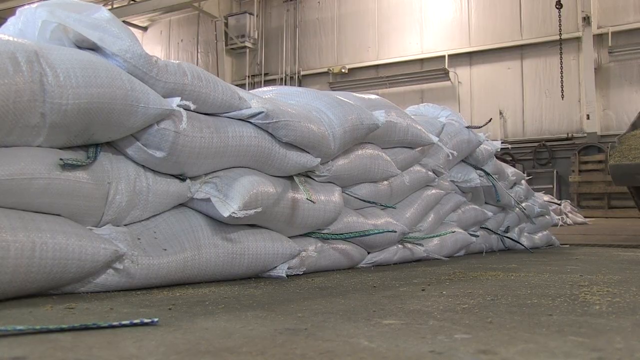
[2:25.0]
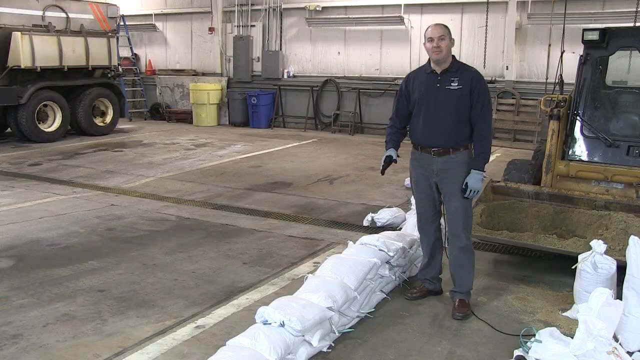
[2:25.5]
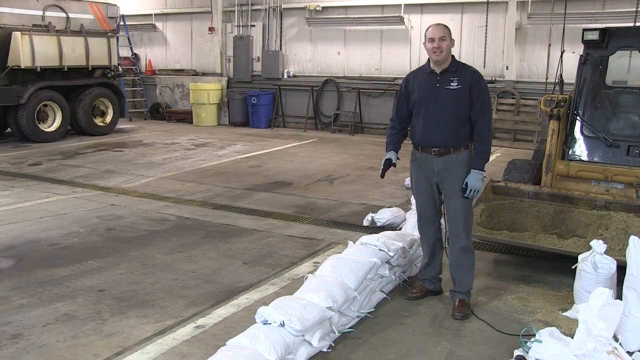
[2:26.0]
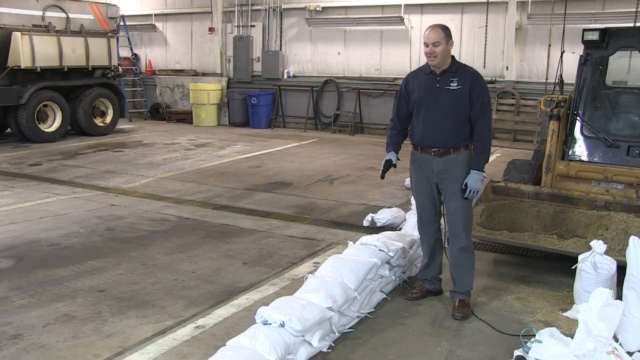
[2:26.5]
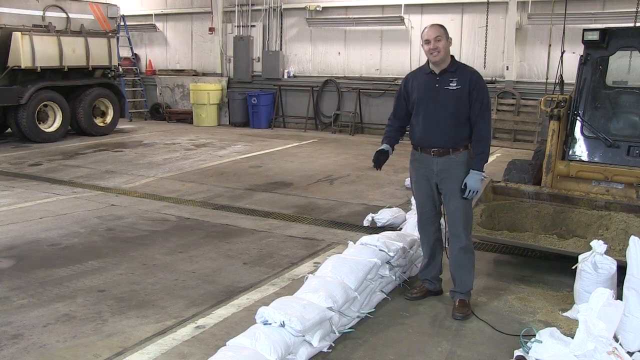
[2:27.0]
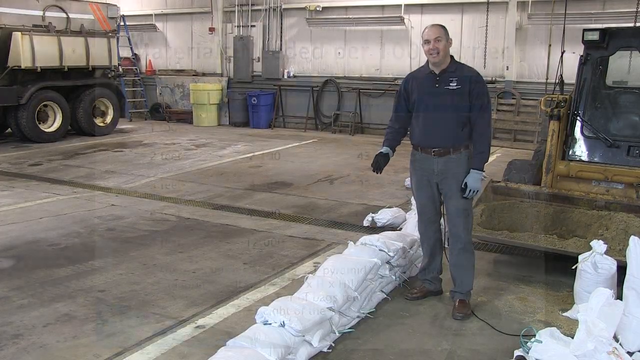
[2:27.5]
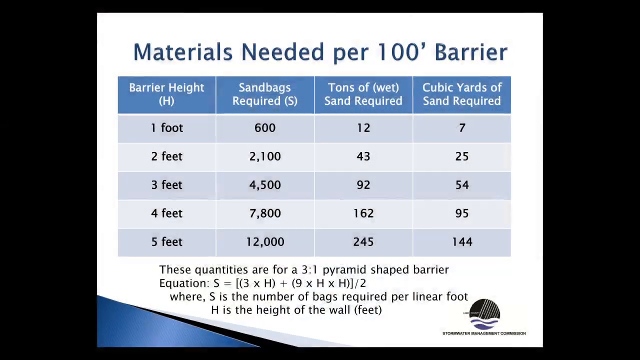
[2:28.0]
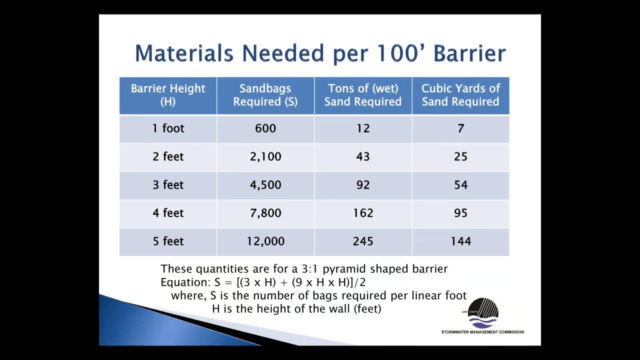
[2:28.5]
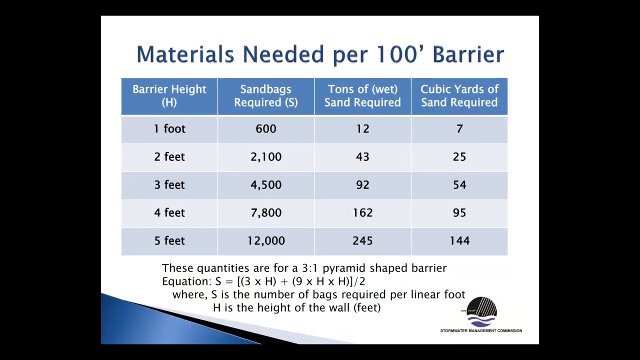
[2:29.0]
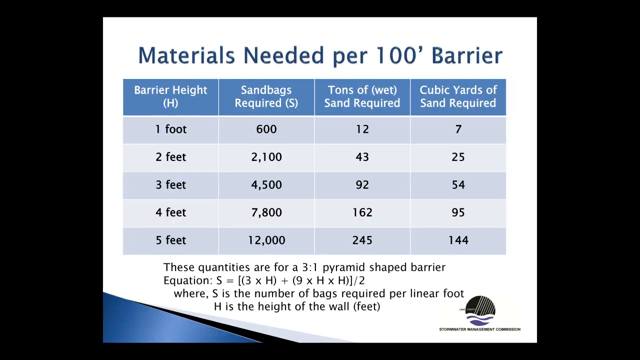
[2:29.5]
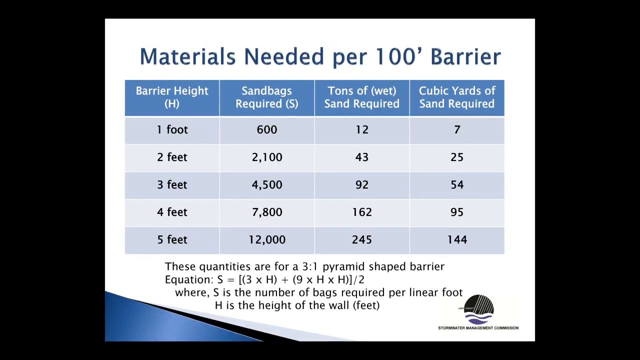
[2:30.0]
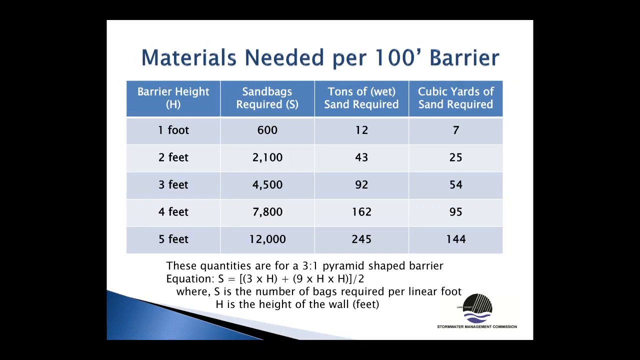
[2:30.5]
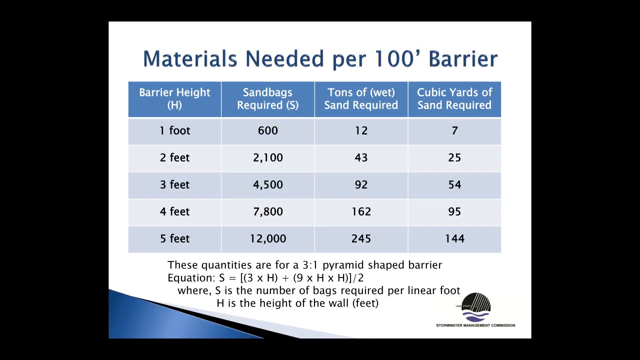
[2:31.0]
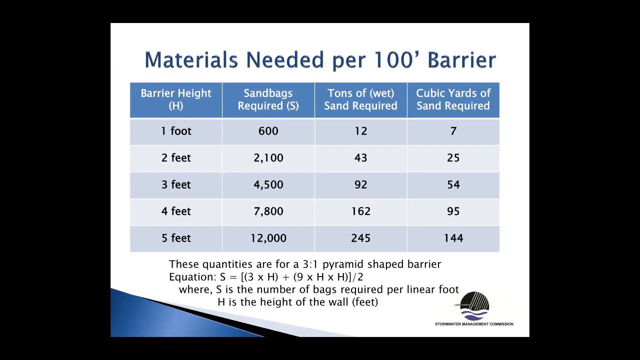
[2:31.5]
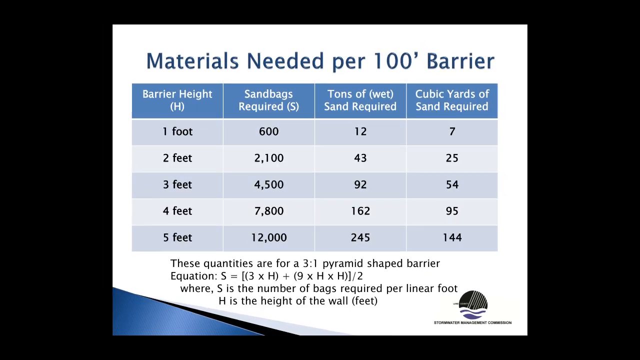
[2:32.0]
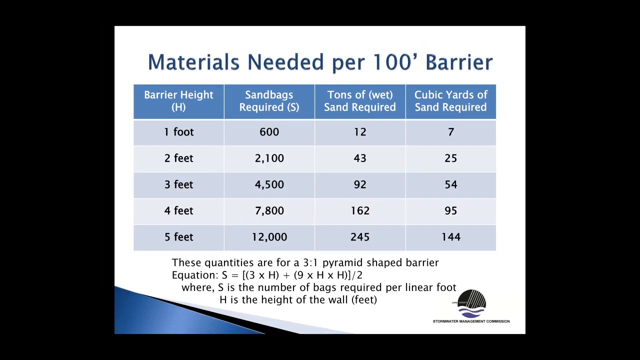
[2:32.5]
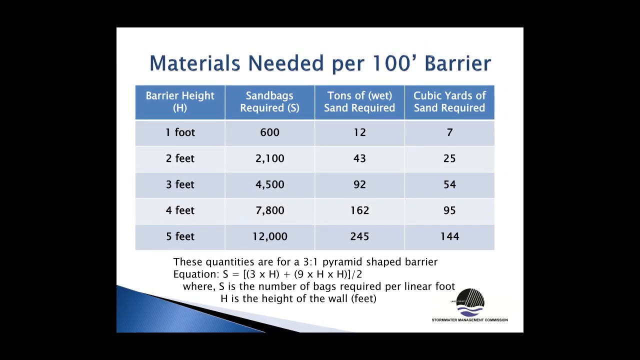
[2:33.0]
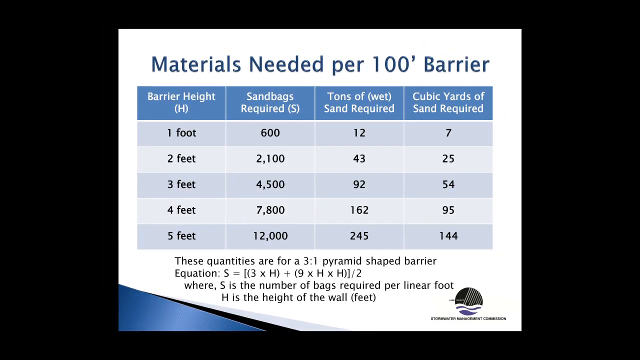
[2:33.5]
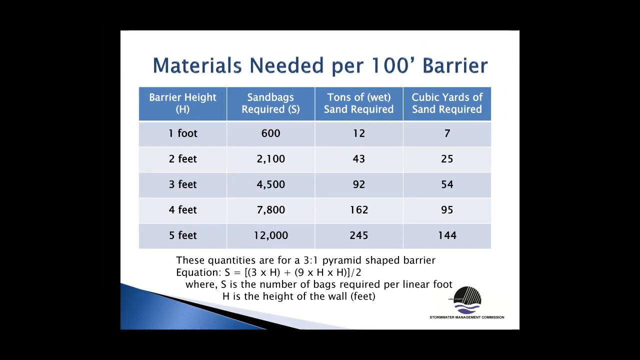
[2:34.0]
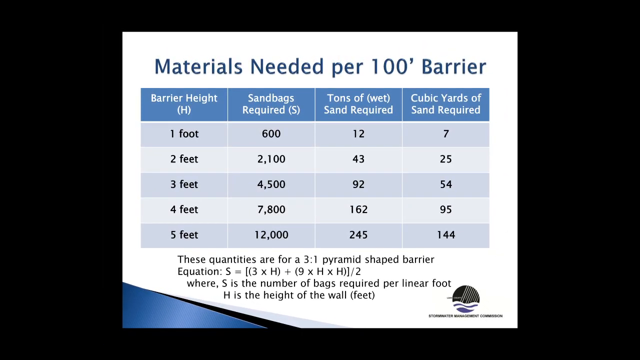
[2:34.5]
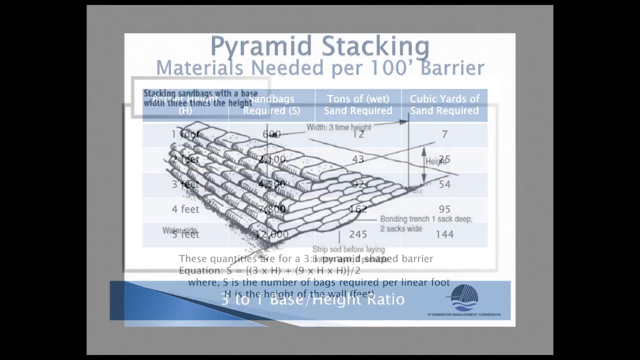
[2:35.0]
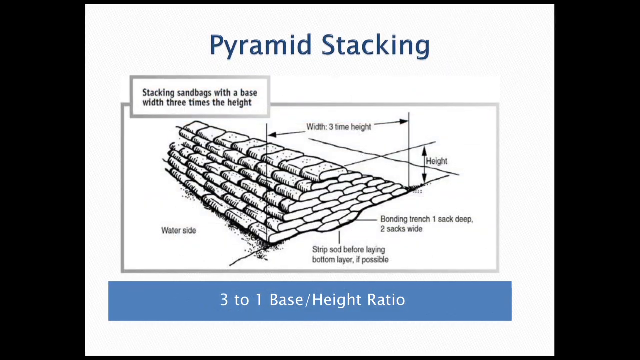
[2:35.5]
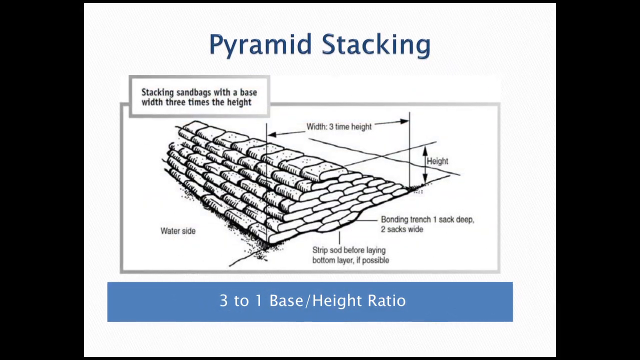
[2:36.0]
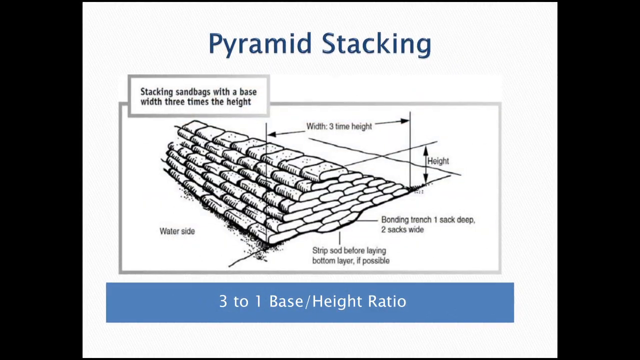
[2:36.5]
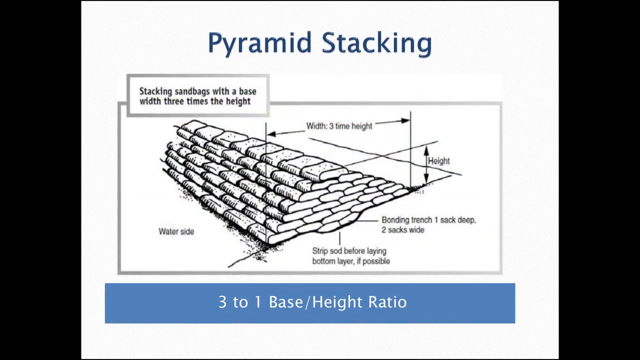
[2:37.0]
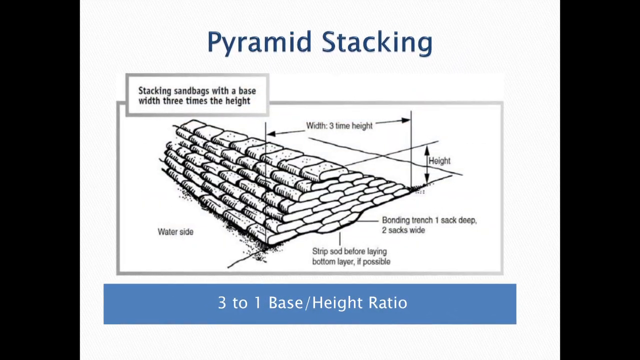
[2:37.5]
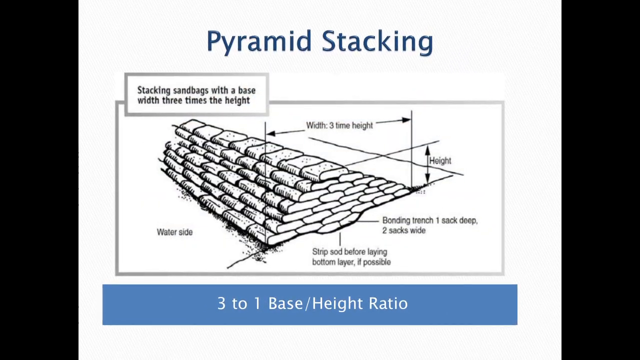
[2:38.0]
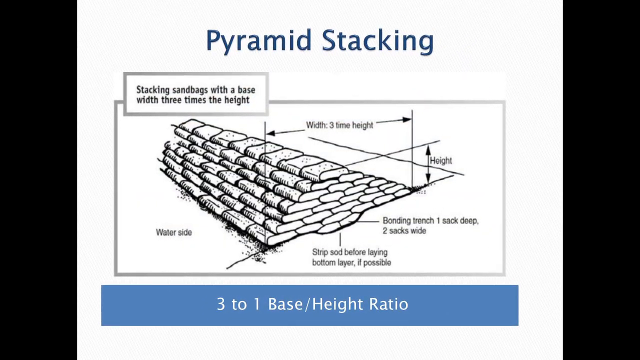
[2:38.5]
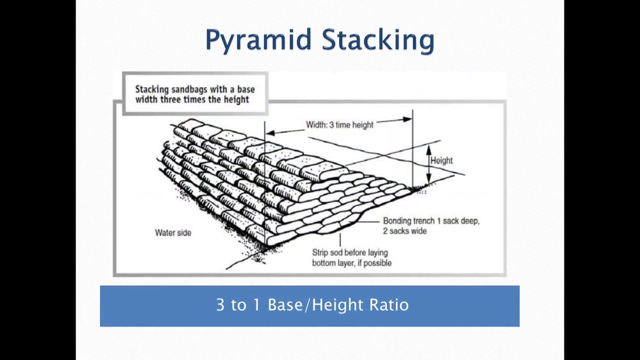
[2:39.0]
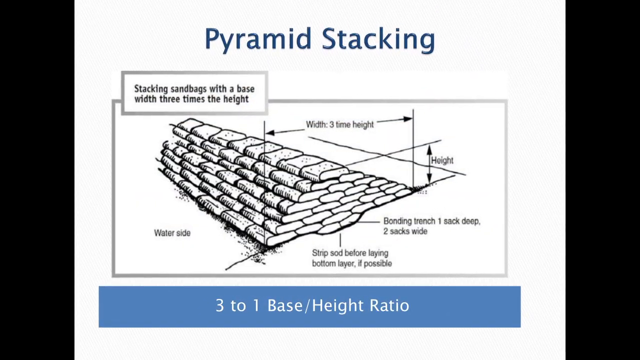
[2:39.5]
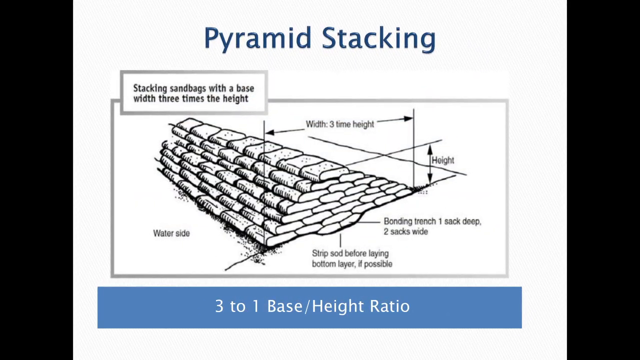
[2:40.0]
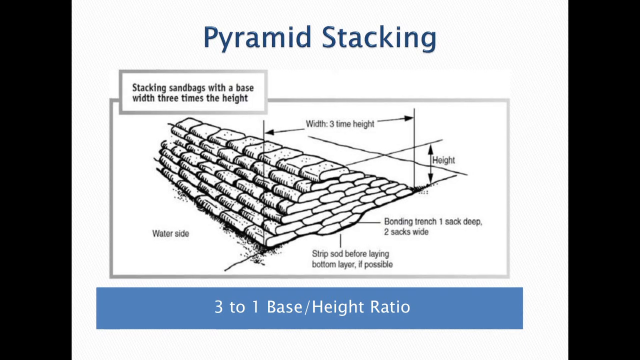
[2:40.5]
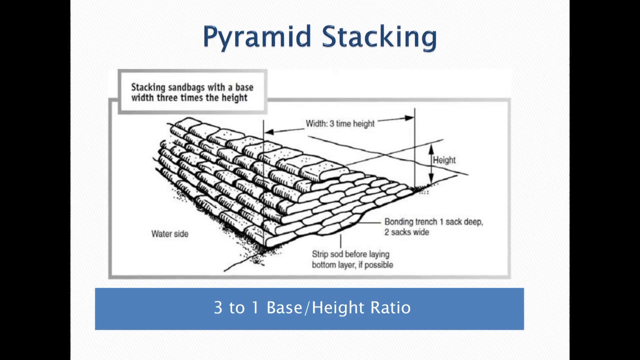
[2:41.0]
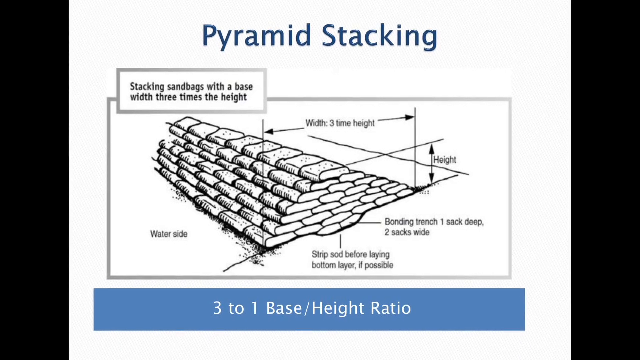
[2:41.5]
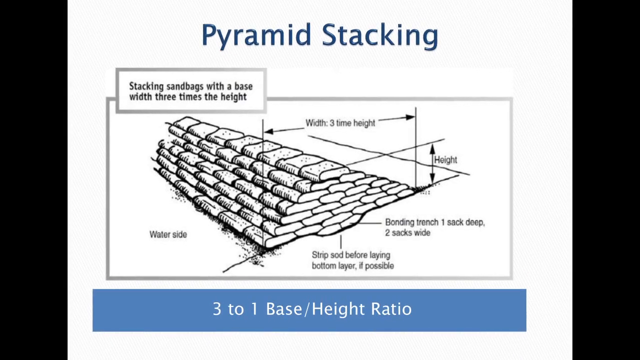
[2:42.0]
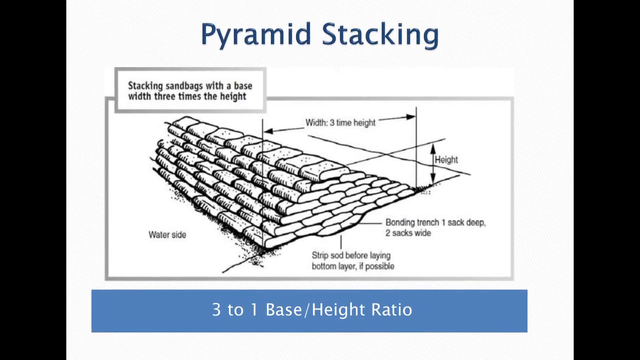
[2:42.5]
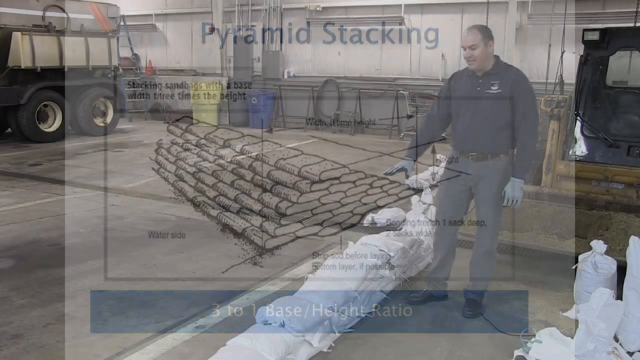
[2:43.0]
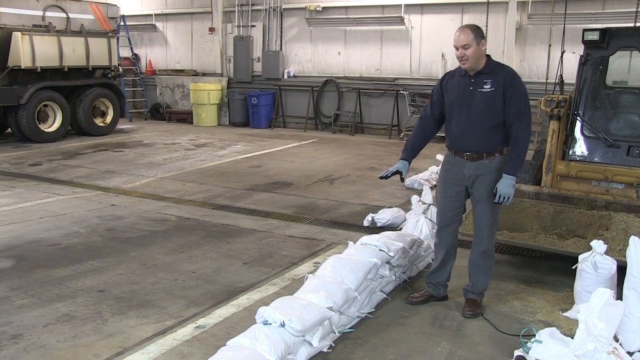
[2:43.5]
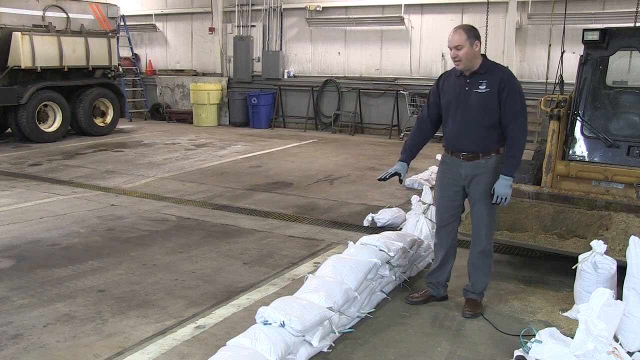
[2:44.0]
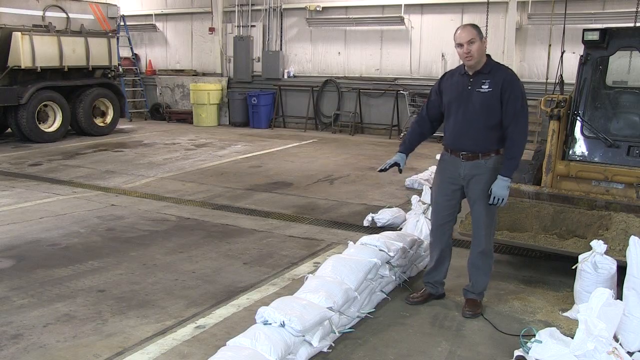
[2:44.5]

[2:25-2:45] The speaker continues gesturing at the growing sandbag wall in the warehouse while speaking. The video then switches to tables of the materials needed for a 100 foot barrier, showing various heights, the number of sandbags, and the units of sand needed. It then switches to another slide showing the concept of pyramid stacking, where sandbags are stacked in a pyramid shape to form the barrier, with vague dimension ratios.